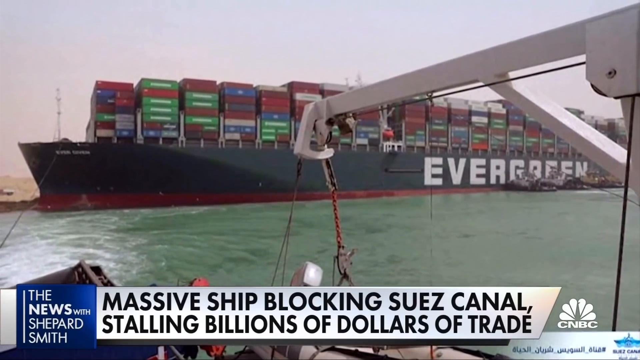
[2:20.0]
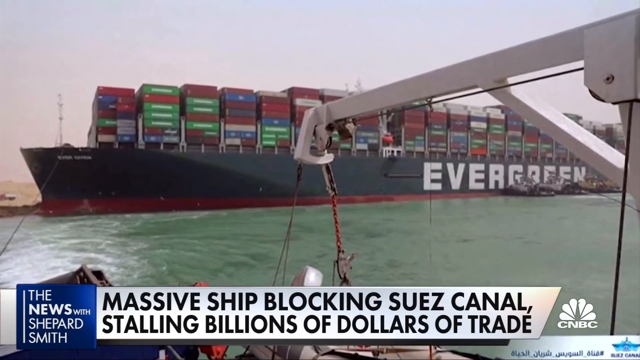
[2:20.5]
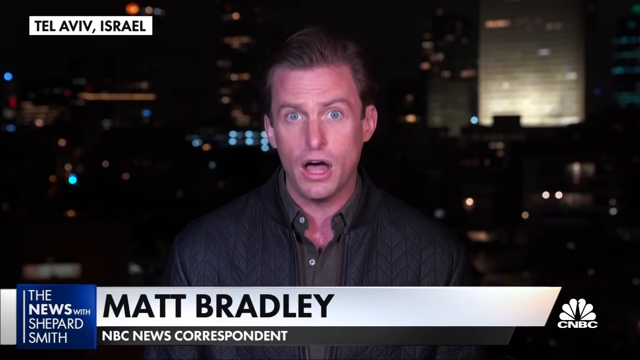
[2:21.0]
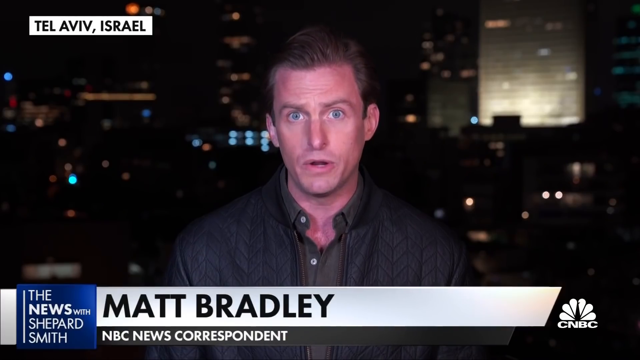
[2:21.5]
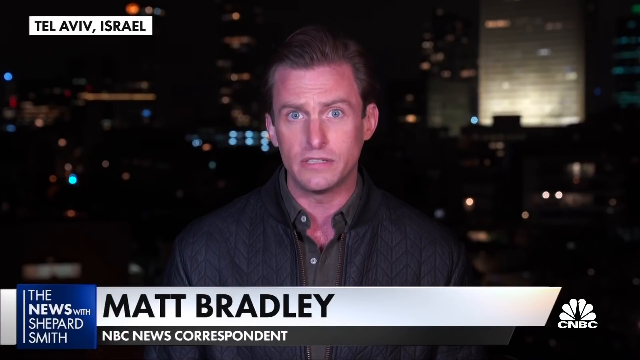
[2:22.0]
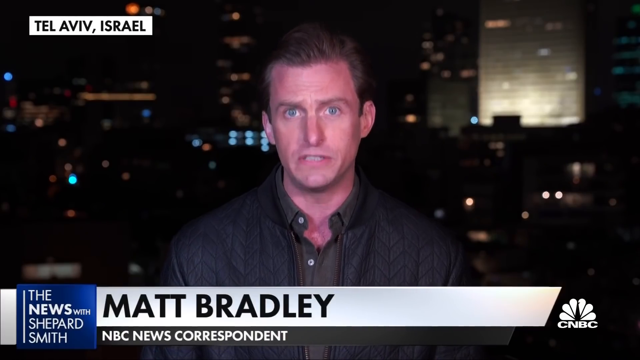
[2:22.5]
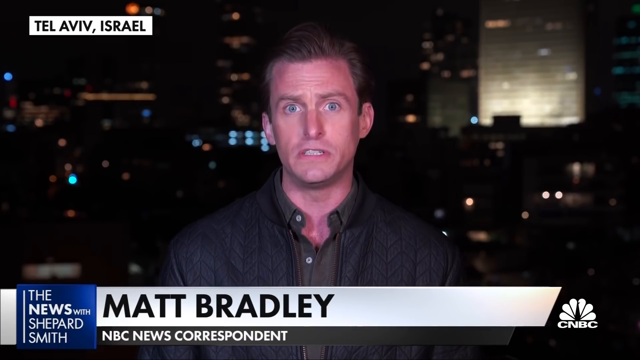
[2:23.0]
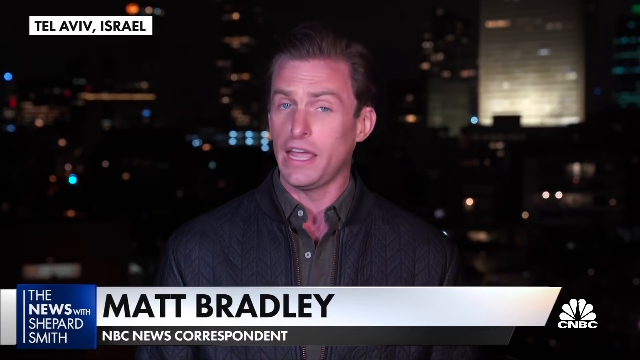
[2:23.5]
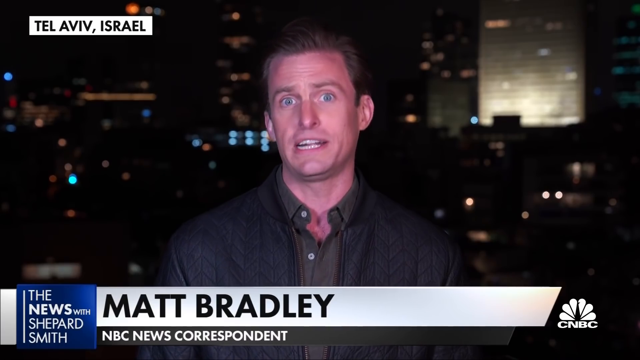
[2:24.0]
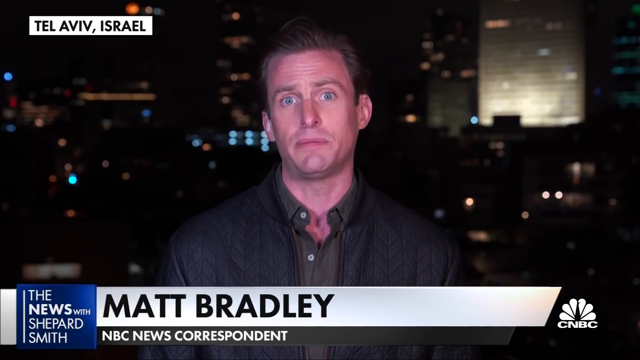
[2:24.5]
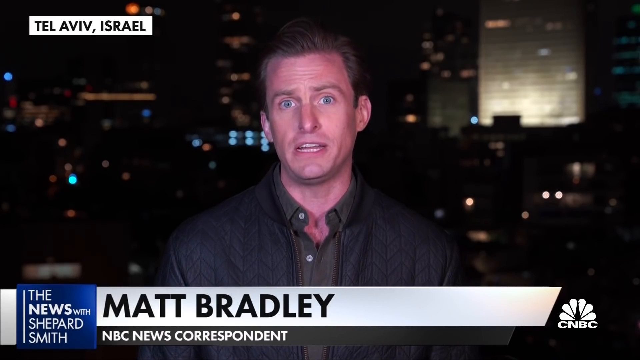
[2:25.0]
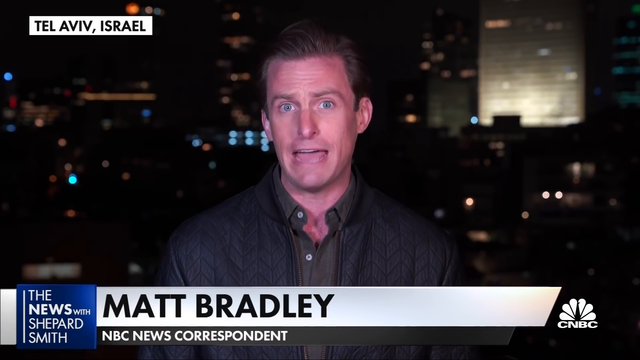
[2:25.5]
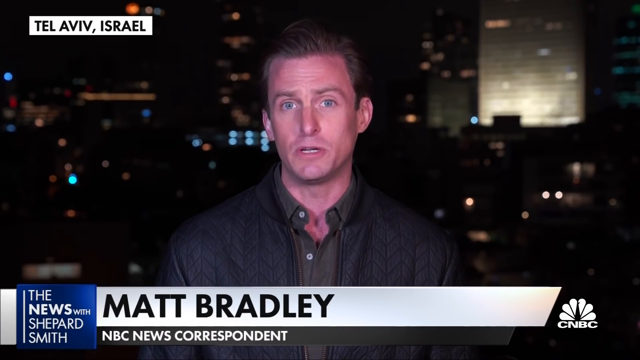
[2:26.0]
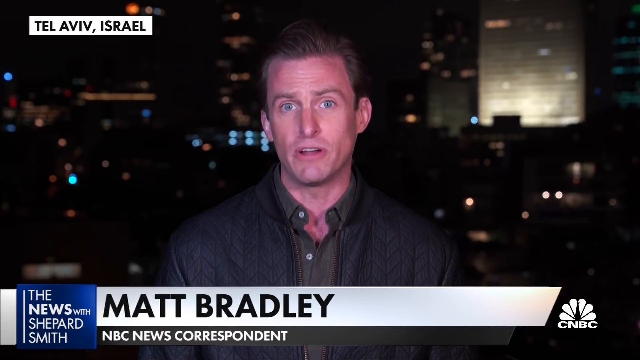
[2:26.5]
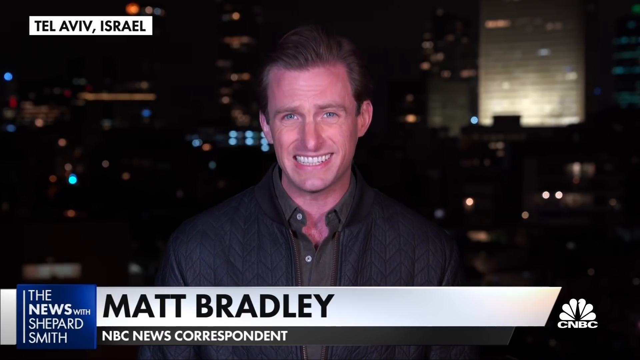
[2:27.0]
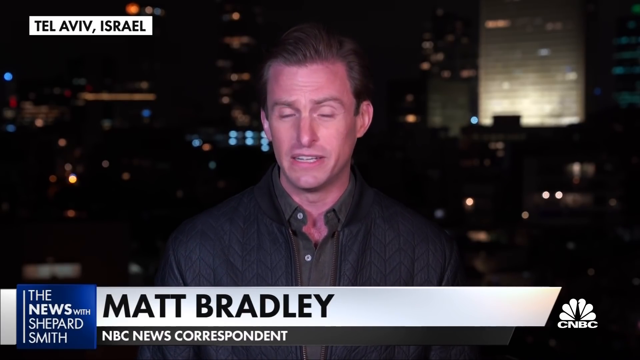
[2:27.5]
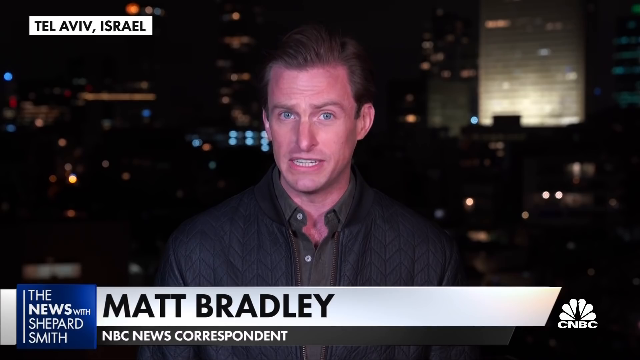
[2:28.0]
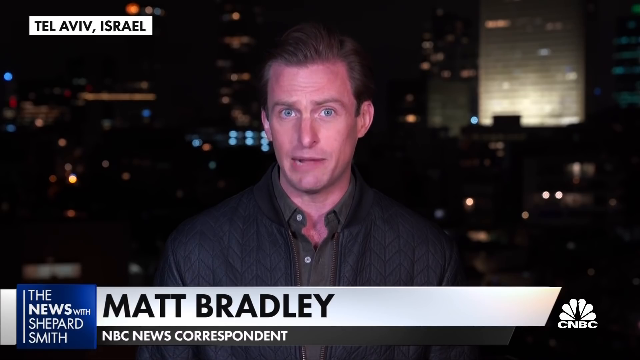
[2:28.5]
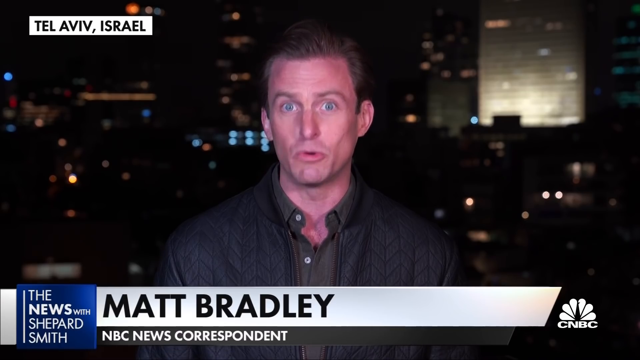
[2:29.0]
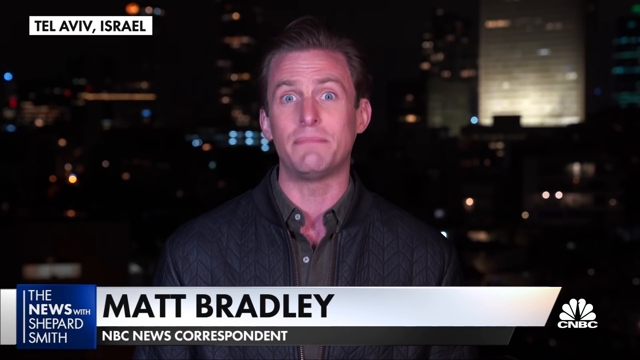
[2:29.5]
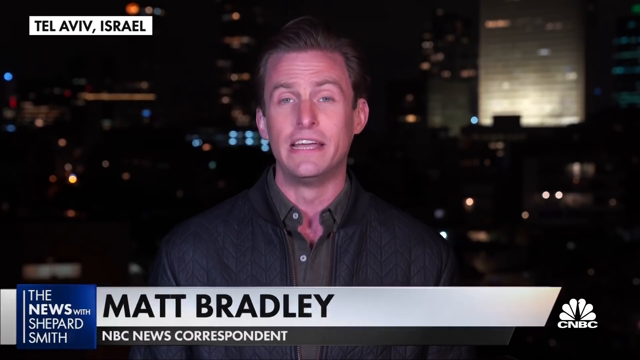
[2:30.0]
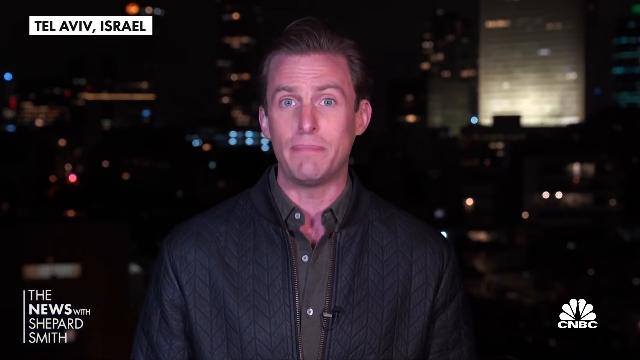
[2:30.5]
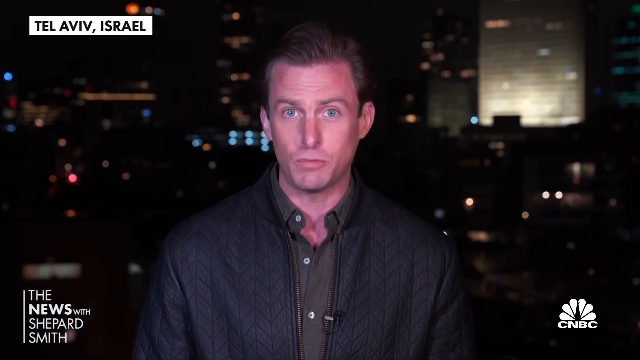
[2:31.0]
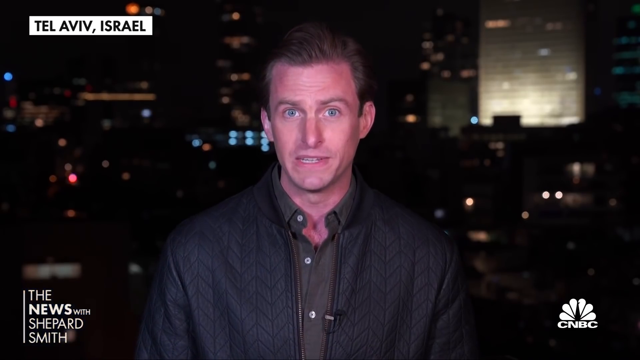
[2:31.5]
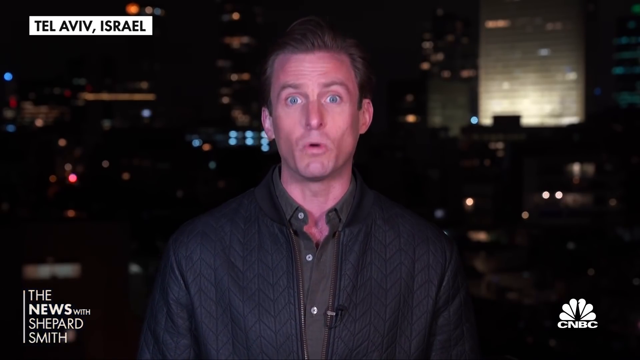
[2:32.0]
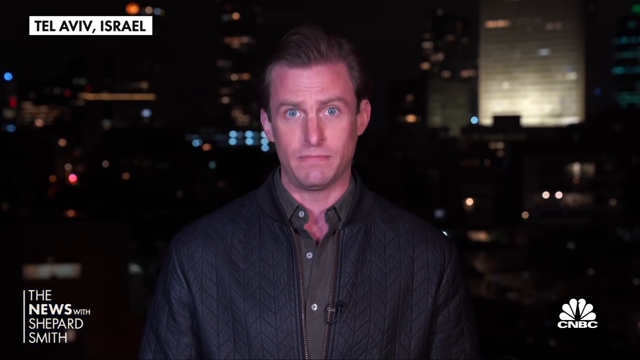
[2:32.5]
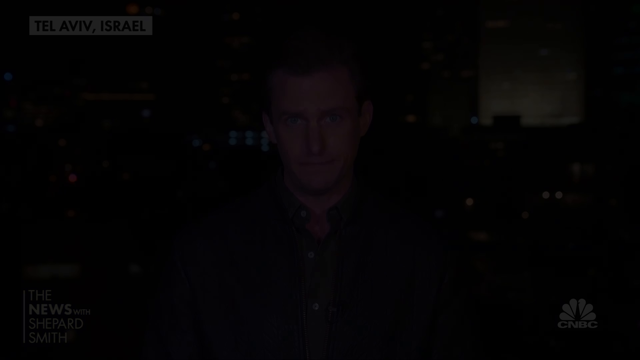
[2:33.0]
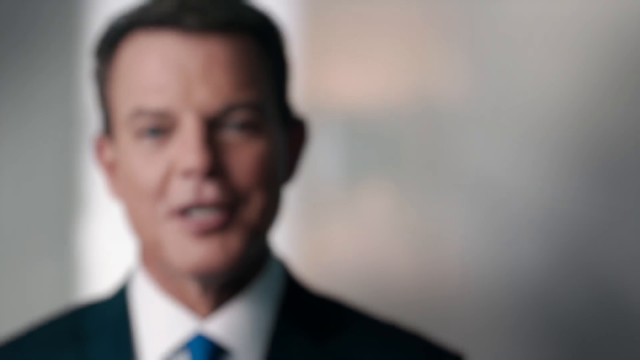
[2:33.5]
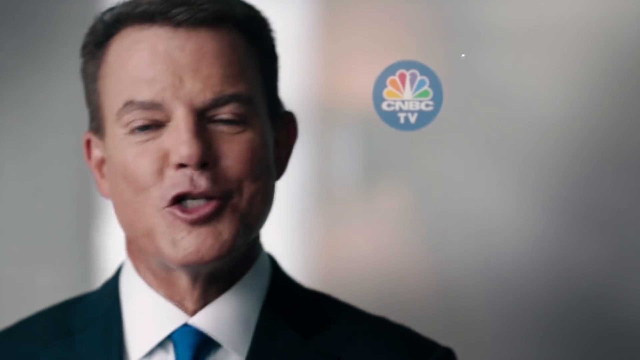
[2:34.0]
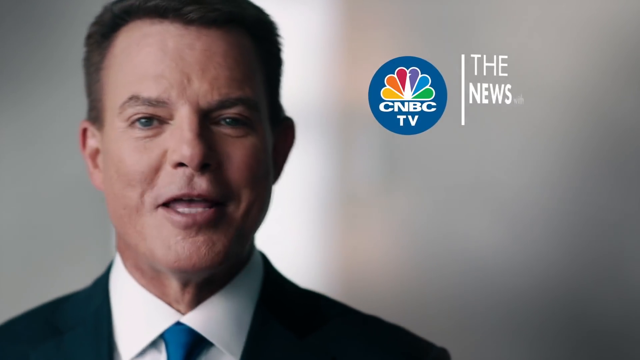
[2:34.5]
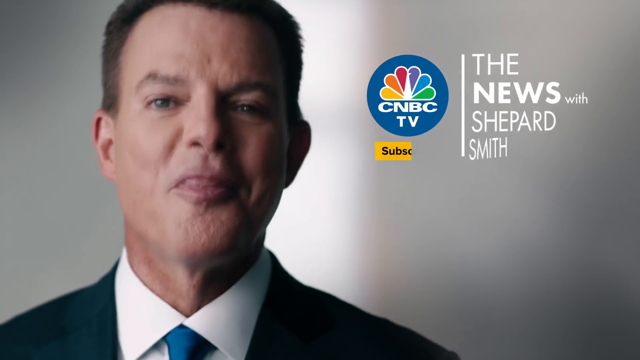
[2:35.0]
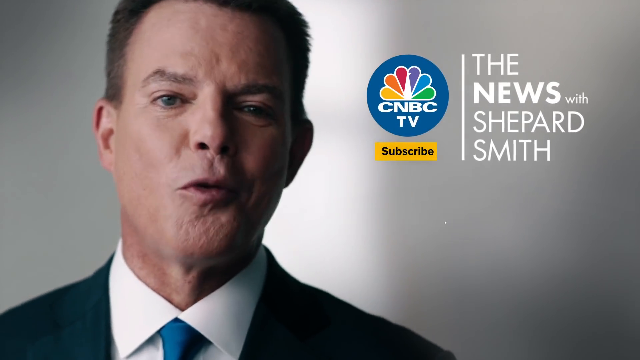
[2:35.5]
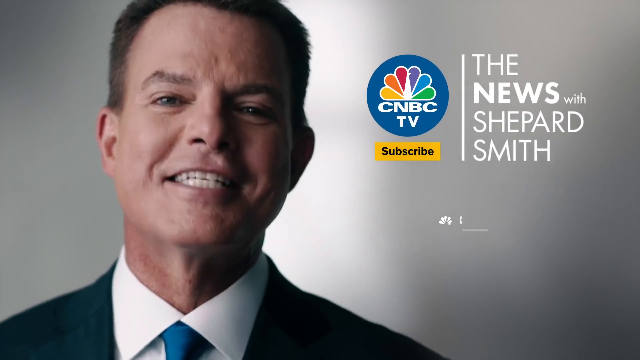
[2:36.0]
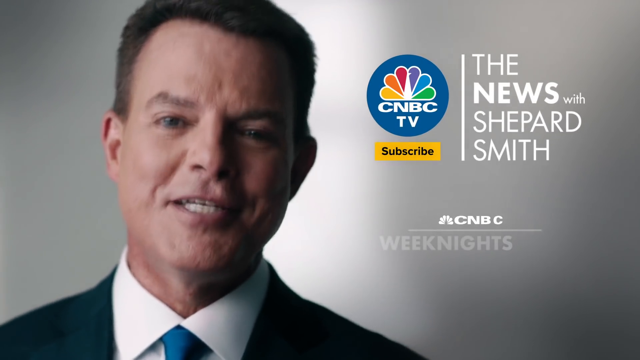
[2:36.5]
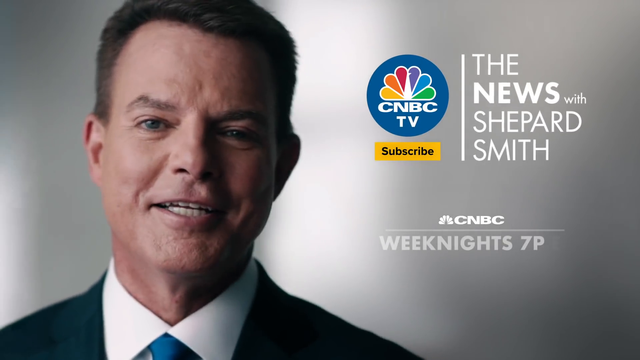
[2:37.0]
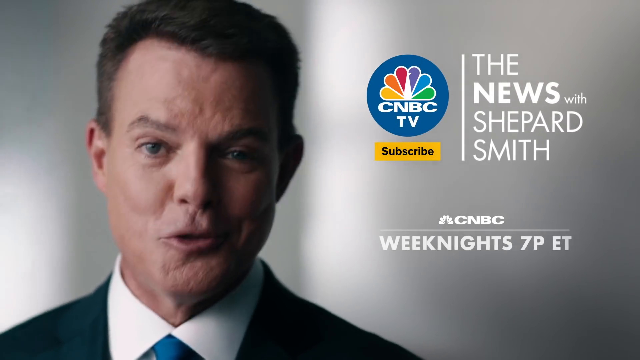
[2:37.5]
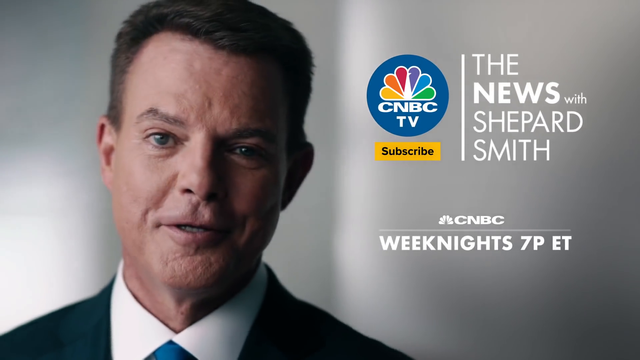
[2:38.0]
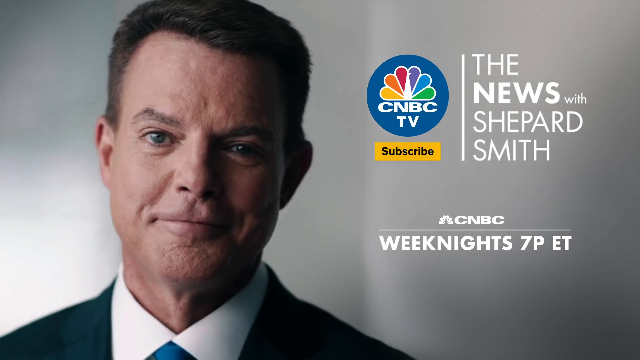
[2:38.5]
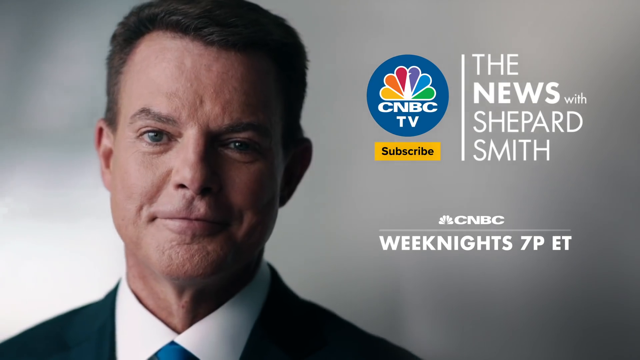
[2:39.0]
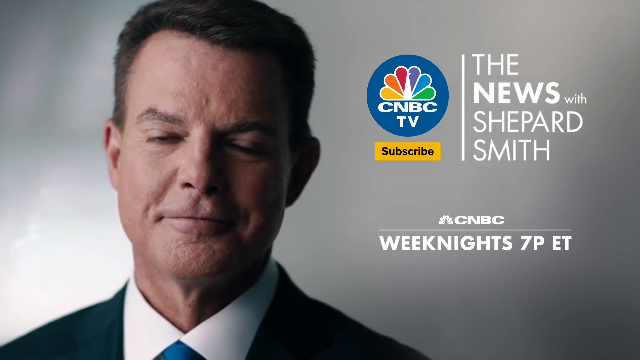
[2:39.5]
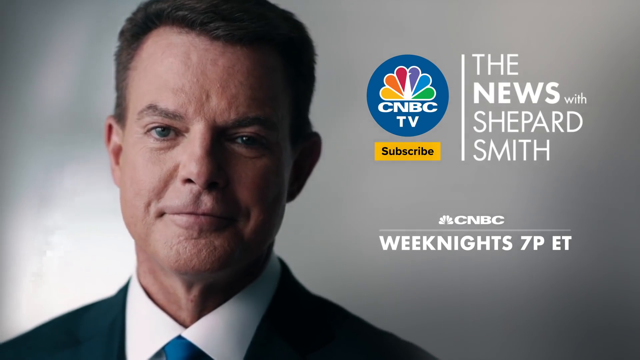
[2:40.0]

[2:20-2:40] Matt Bradley is shown again in Tel Aviv in front of the dark city, the sky blue at night and the building on the right lit up. He is dressed the same as before, with "Matt Bradley" in black at the bottom and the white CNBC logo on the right. He looks at the camera and seems to be talking. The video then cuts to what appears to be a television commercial: on the left is a white man with shorter brown hair who looks like he is wearing a penguin suit, and on the right is the CNBC logo in color with the NBC peacock. "the news with Shepard Smith" pops up, and the man is apparently Shepard Smith, seen earlier in the video. Under the CNBC logo, "subscribe" appears in black text on a yellow background. At the bottom, the white CNBC logo appears again with the text "weeknights 7PET", meaning 7 p.m. Eastern on weeknights.